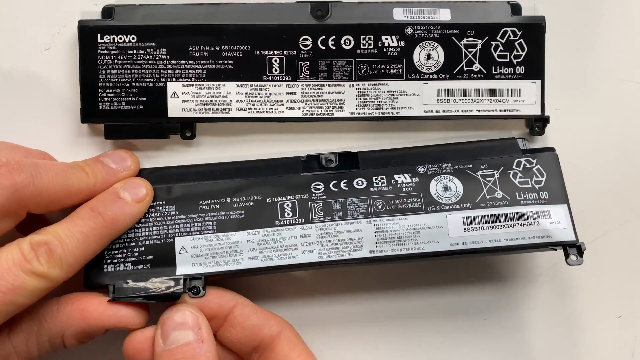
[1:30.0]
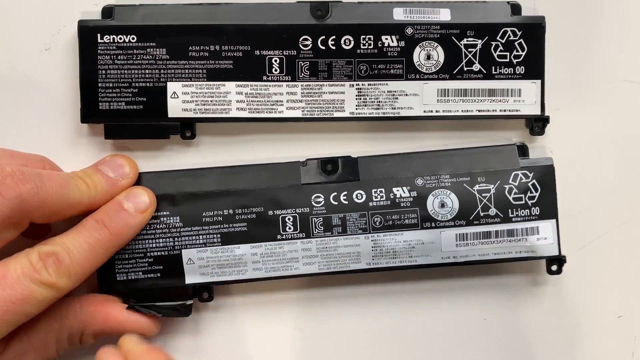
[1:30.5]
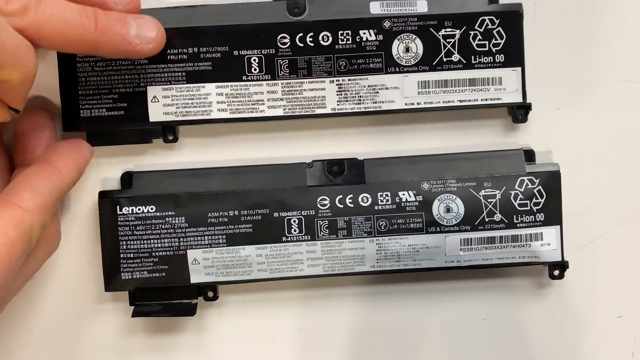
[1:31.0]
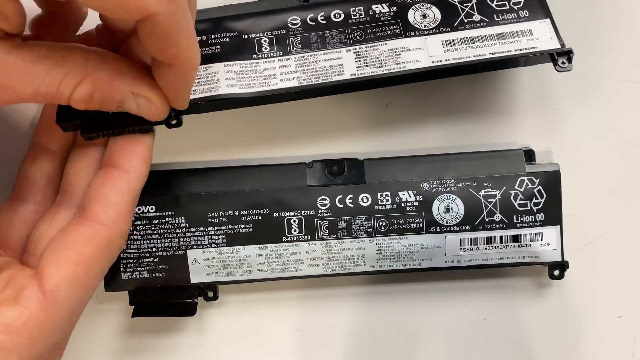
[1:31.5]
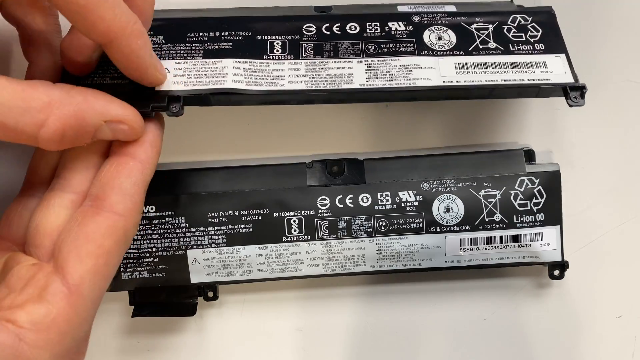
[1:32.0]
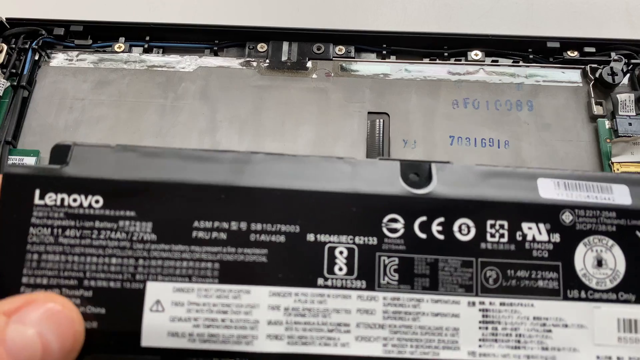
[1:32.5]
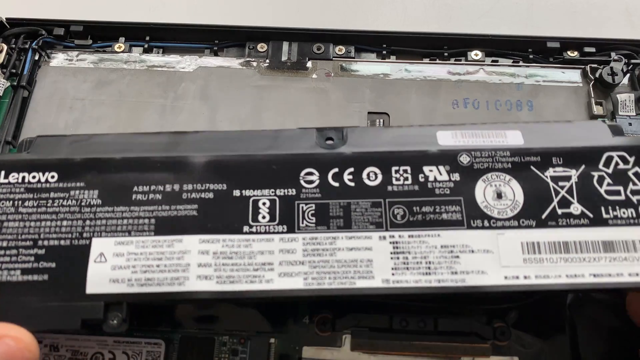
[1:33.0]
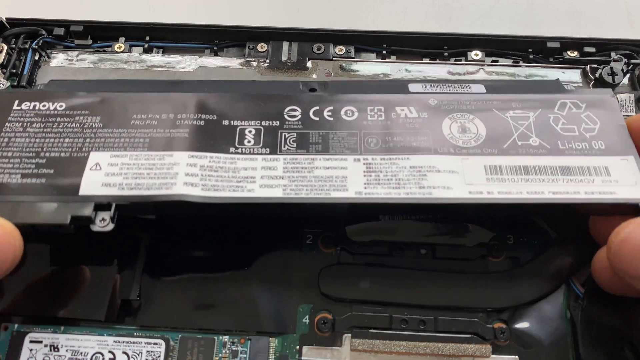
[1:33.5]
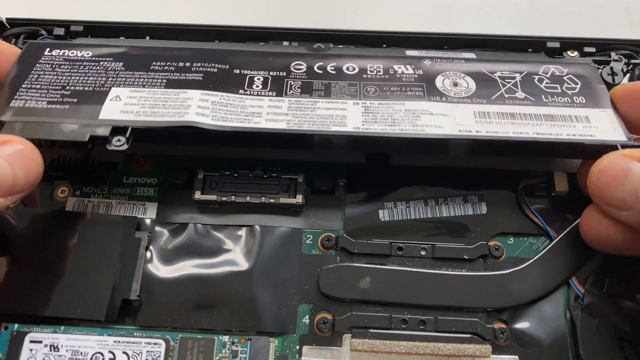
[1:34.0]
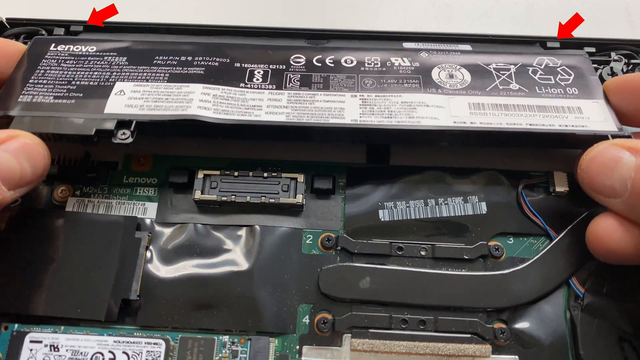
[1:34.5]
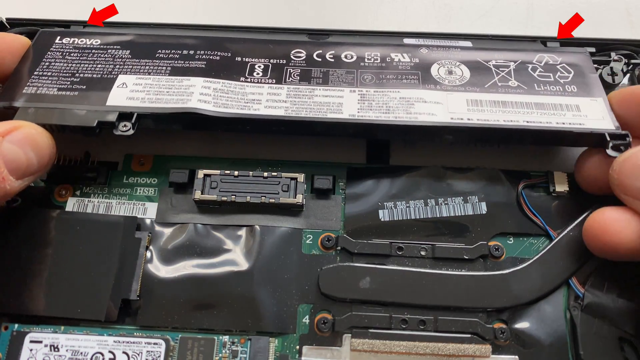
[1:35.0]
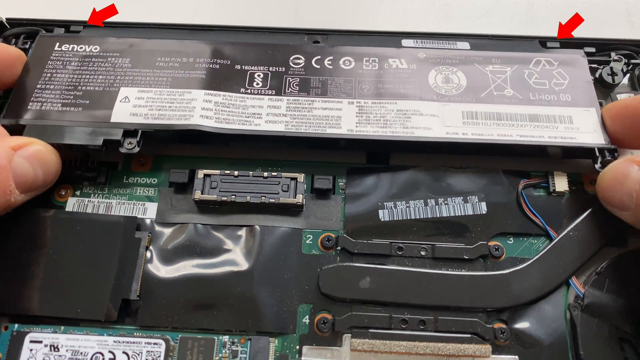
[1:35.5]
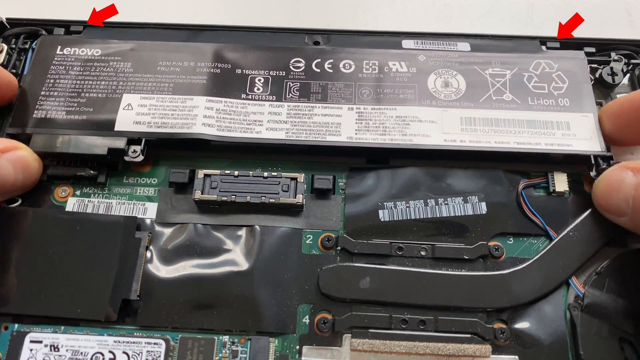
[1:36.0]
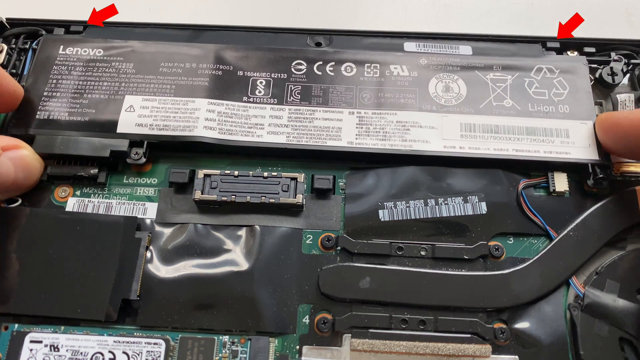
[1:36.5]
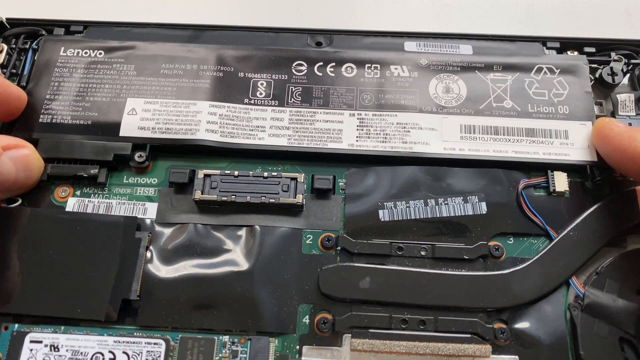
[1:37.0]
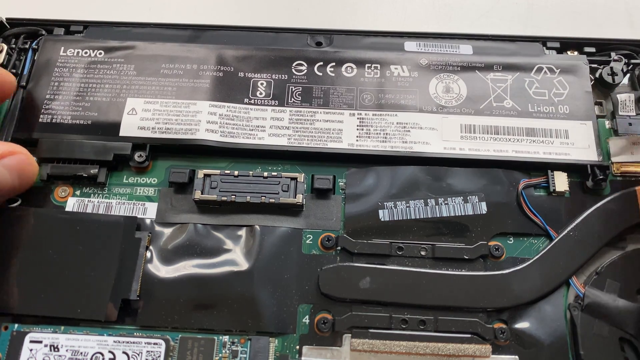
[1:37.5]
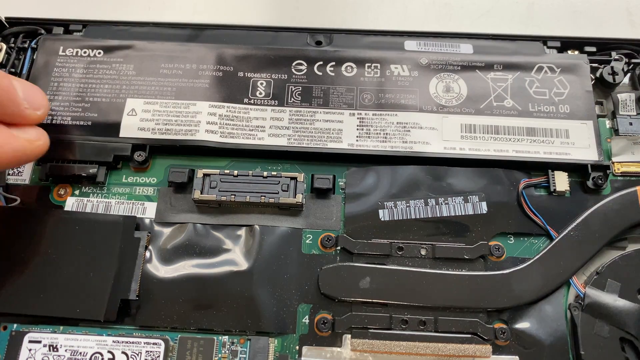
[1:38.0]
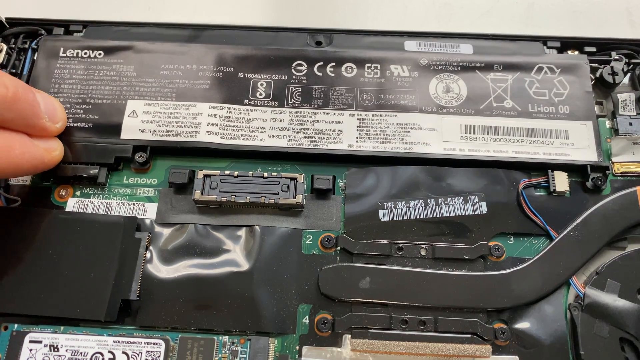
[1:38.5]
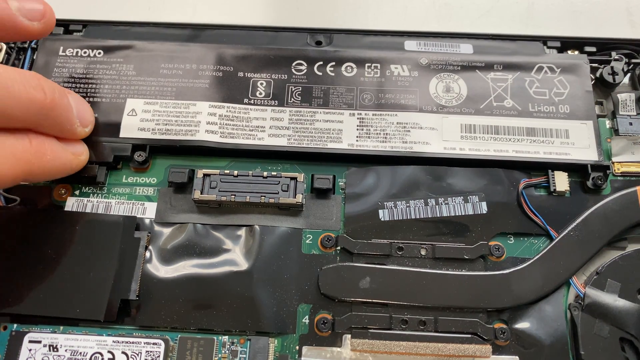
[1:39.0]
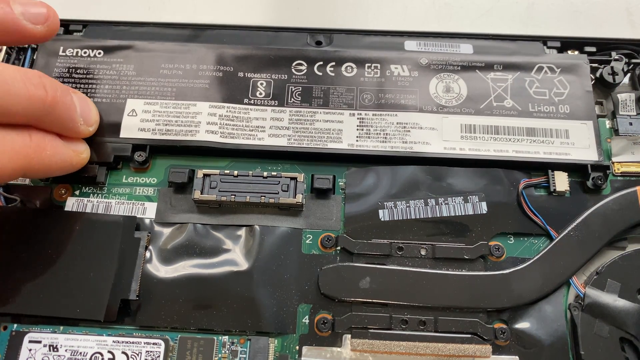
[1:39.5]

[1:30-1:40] The man replaces the battery, or whatever the part is, and puts it back in the computer. There are many barcodes under the back panel he removed. When the two batteries are side by side, the one he puts into the laptop looks nicer than the old one, which looks kind of worn.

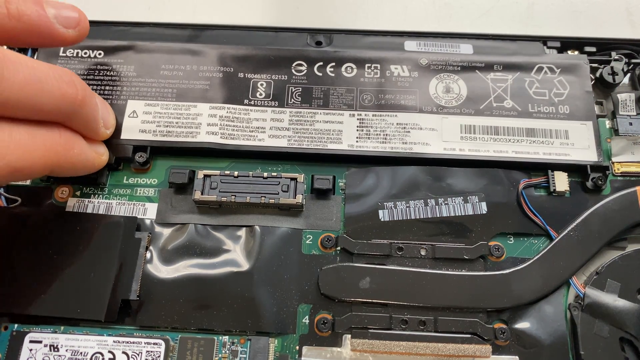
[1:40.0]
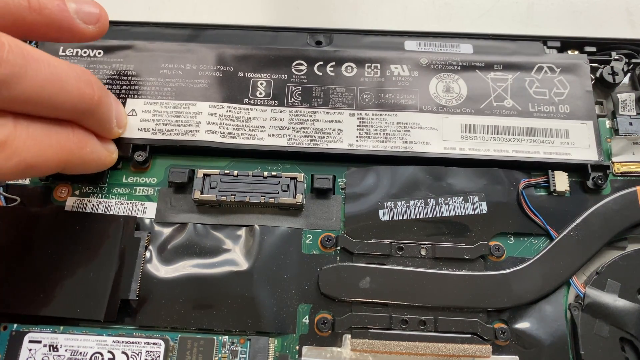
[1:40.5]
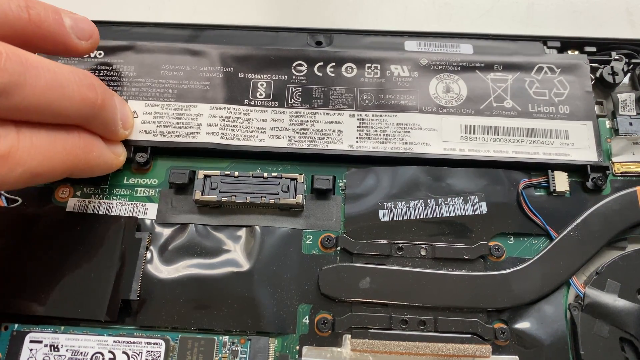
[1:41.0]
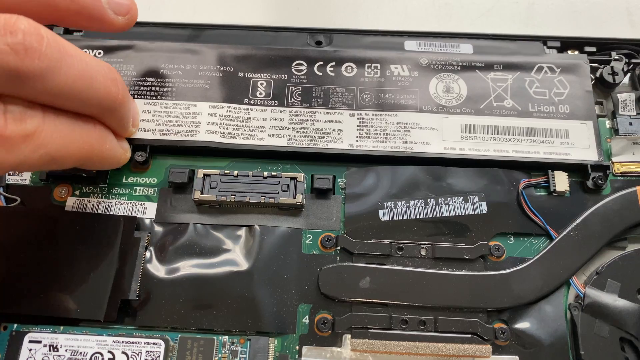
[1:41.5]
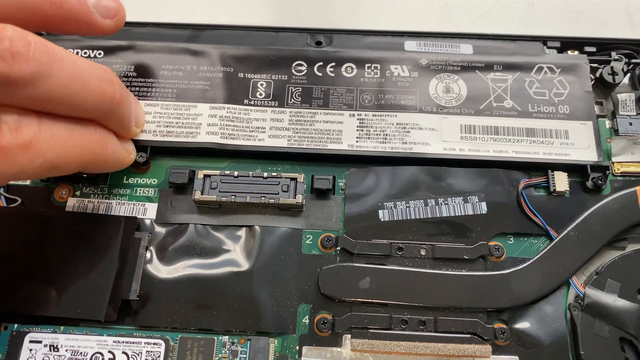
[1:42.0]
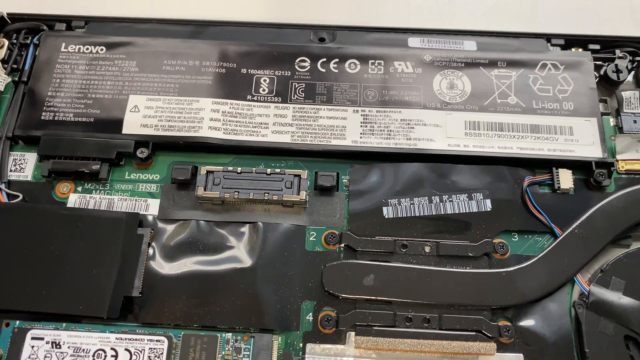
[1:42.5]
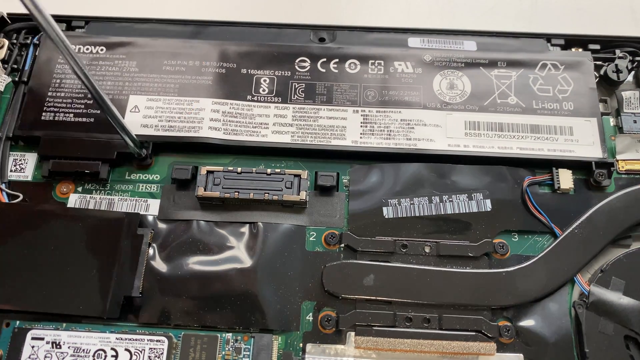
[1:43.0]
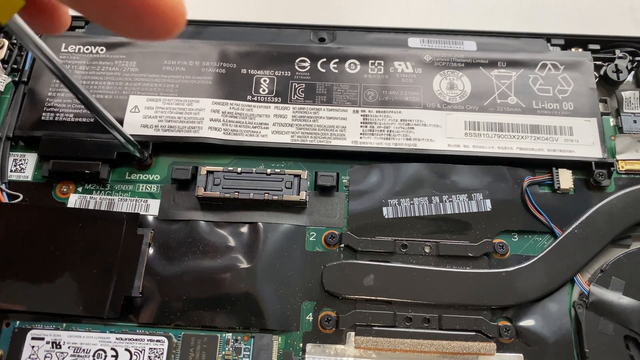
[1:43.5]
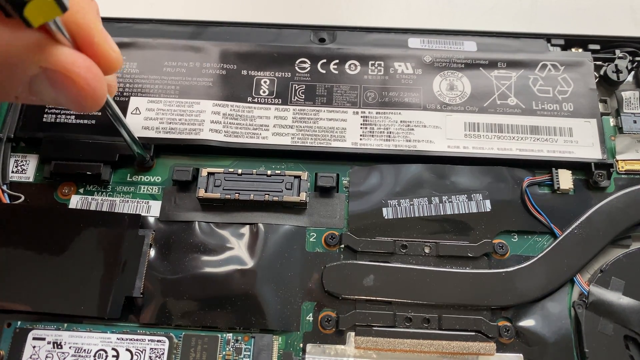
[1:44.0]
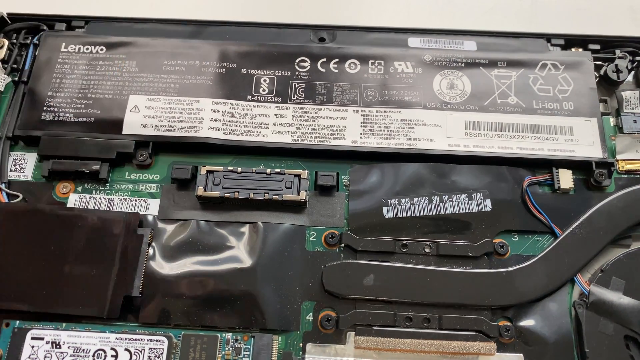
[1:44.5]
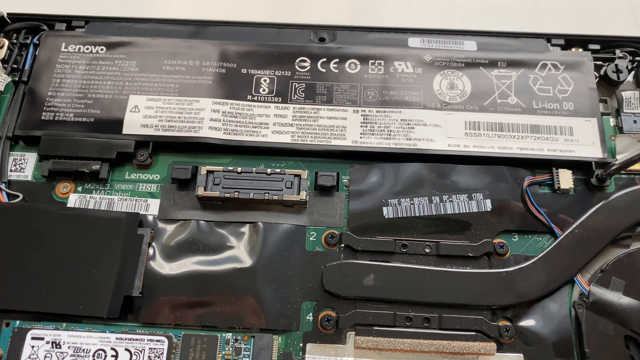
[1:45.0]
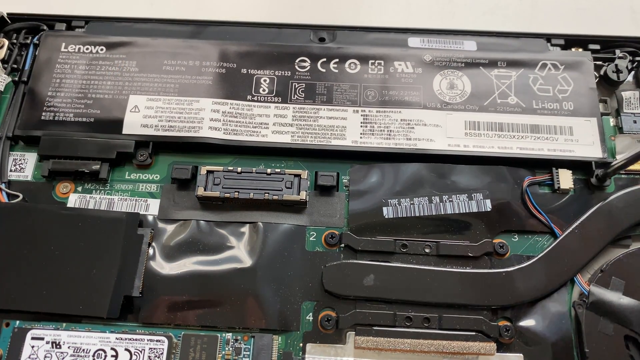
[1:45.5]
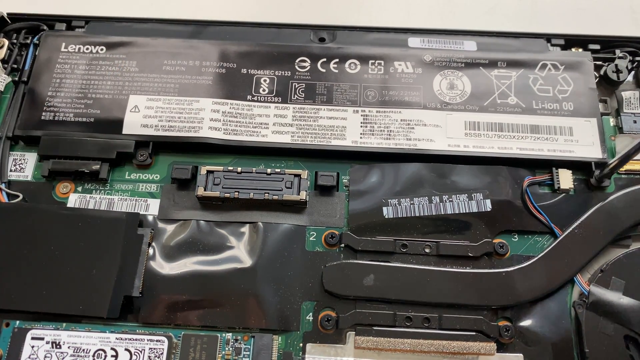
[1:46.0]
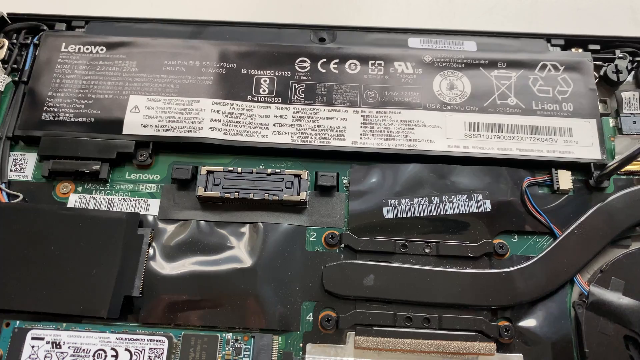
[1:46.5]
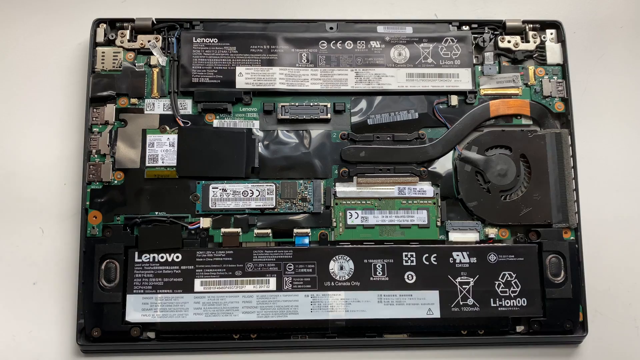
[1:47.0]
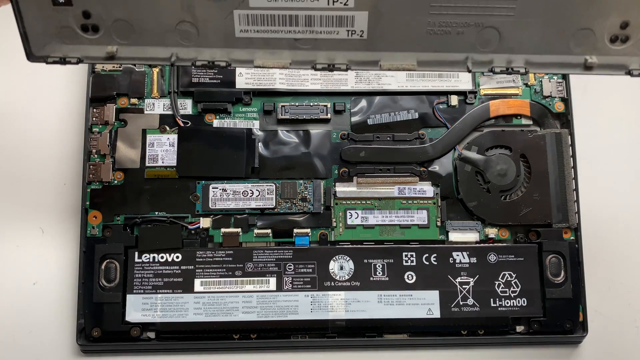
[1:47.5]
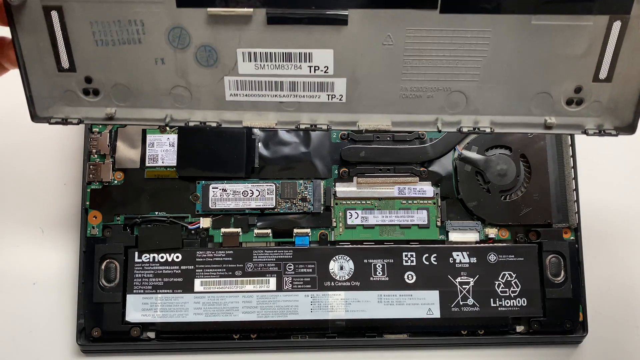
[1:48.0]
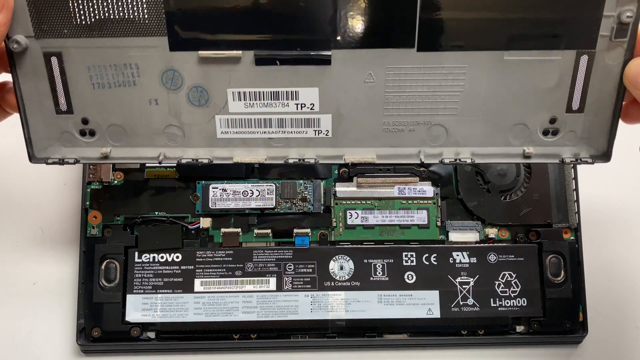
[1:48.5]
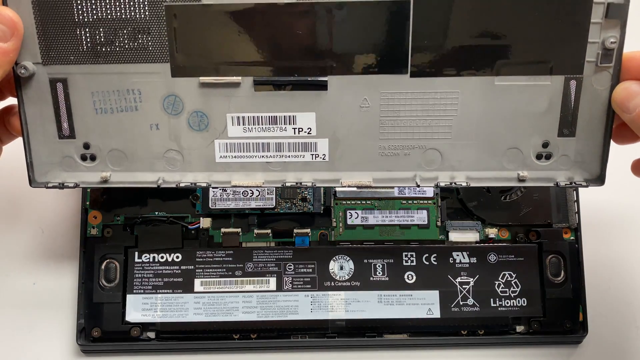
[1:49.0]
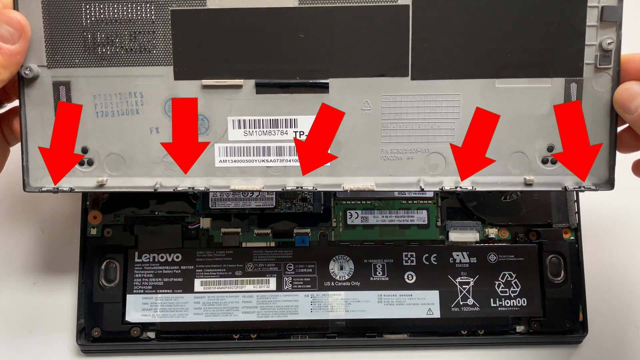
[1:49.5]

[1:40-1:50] The man screws the new piece into the laptop. He then picks up the back panel, and a number of animated arrows appear on top of the screw holes of the back panel. The scene does not change, with the Windows laptop as the main subject and the man making the adjustments as the second subject.